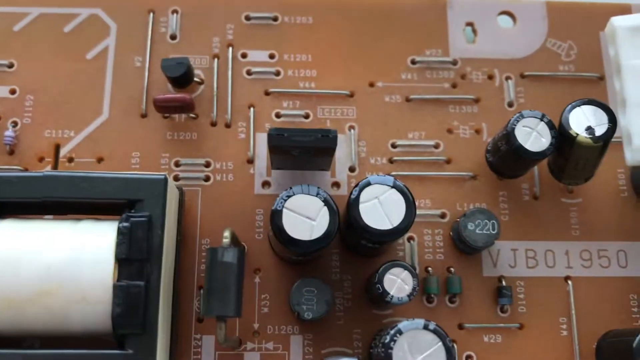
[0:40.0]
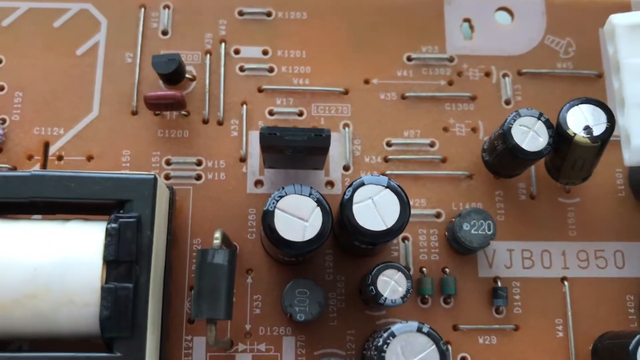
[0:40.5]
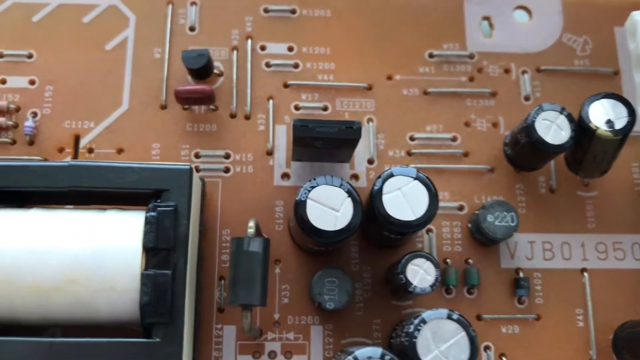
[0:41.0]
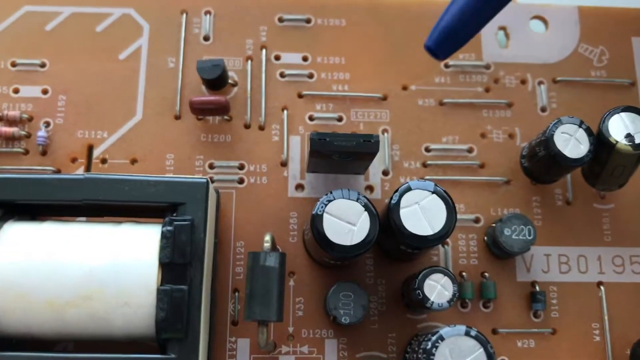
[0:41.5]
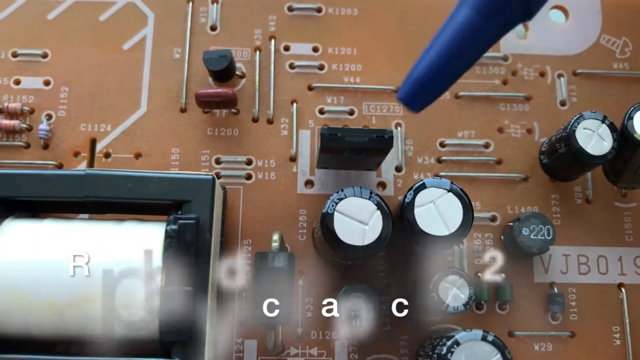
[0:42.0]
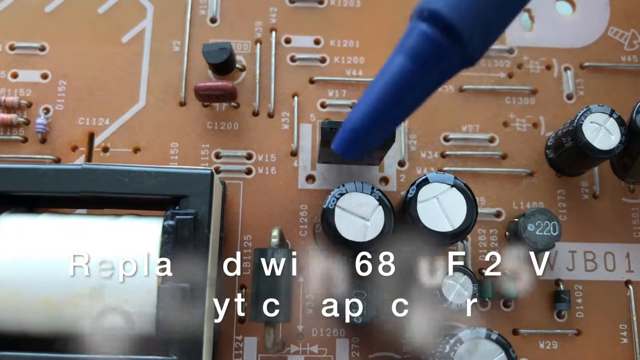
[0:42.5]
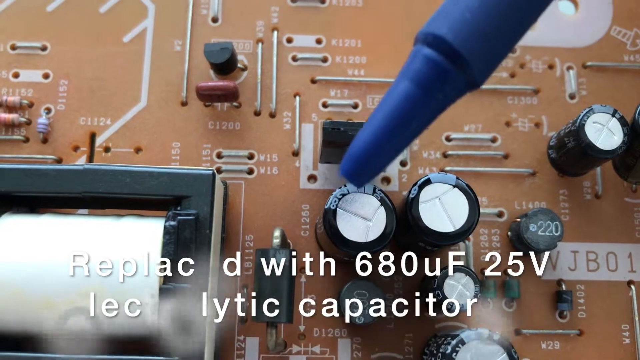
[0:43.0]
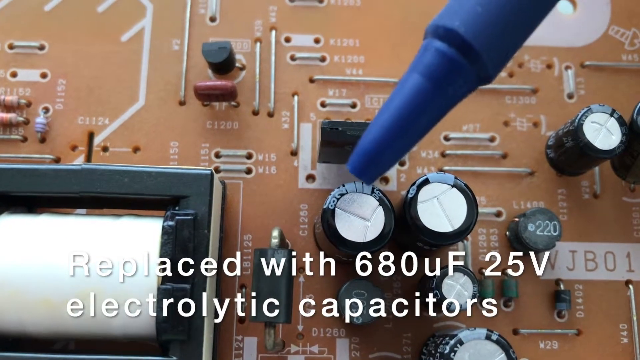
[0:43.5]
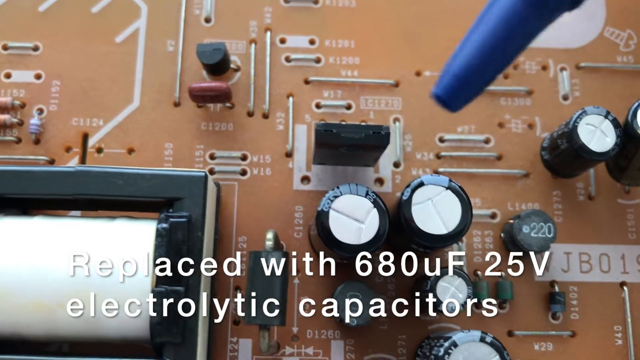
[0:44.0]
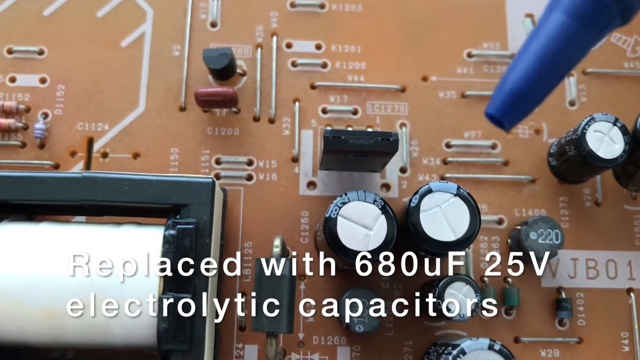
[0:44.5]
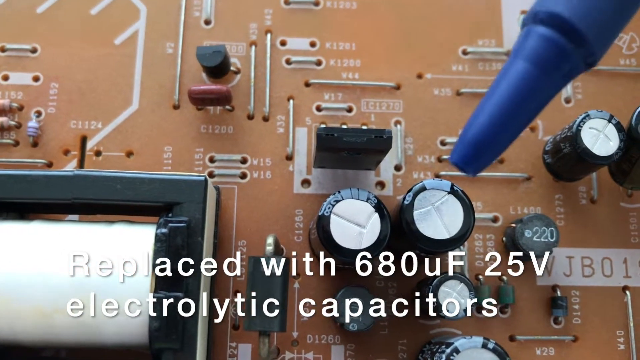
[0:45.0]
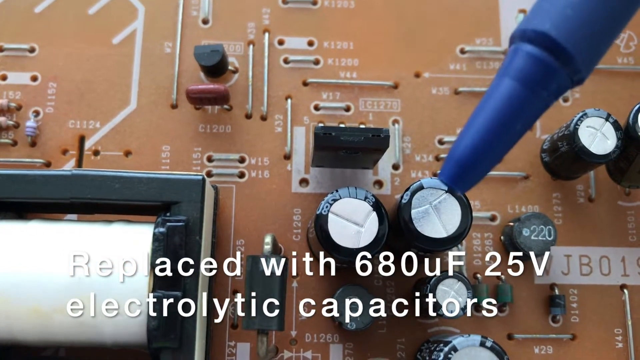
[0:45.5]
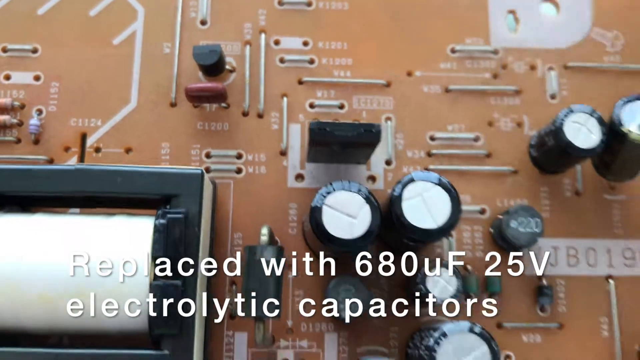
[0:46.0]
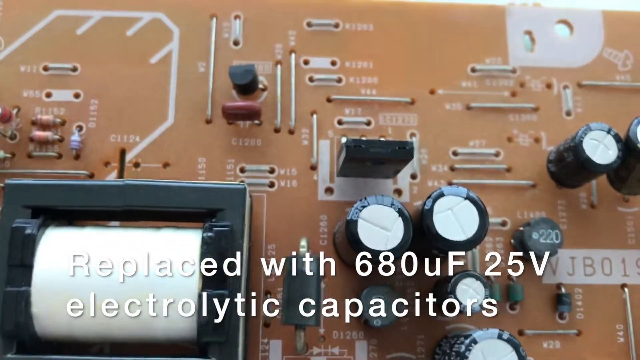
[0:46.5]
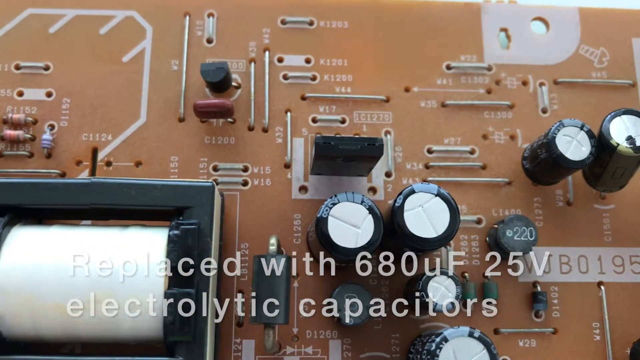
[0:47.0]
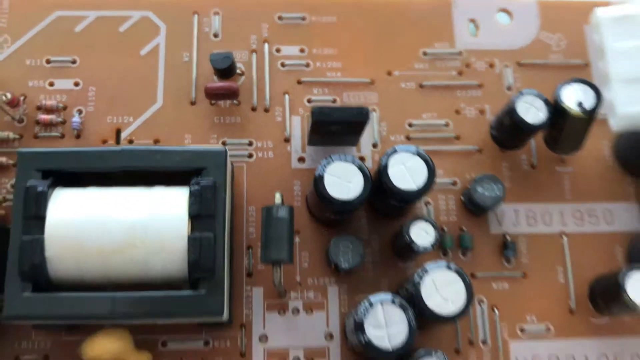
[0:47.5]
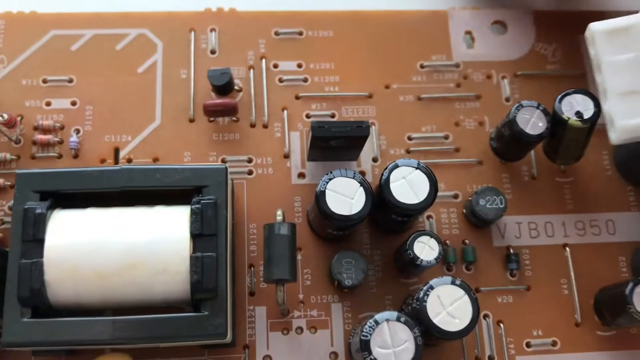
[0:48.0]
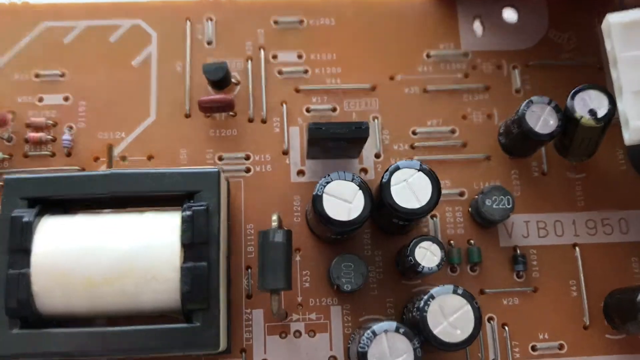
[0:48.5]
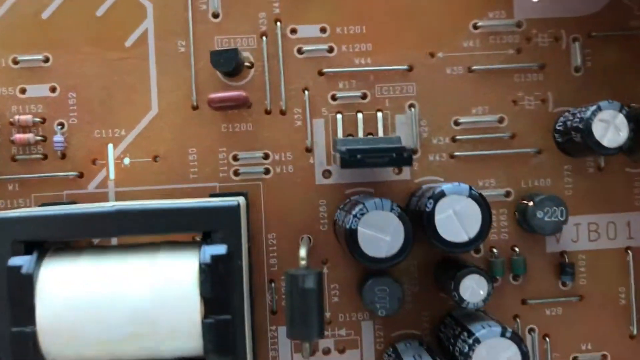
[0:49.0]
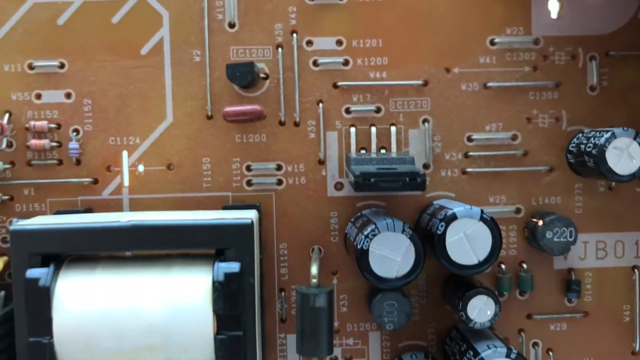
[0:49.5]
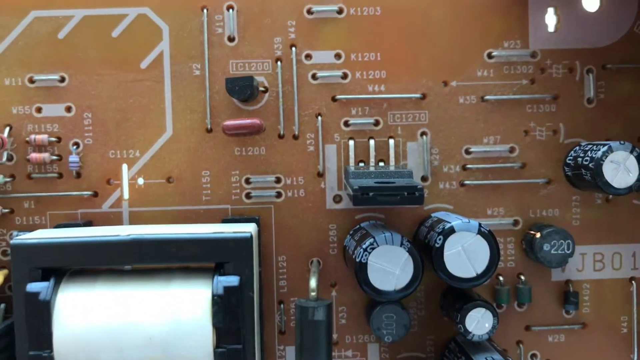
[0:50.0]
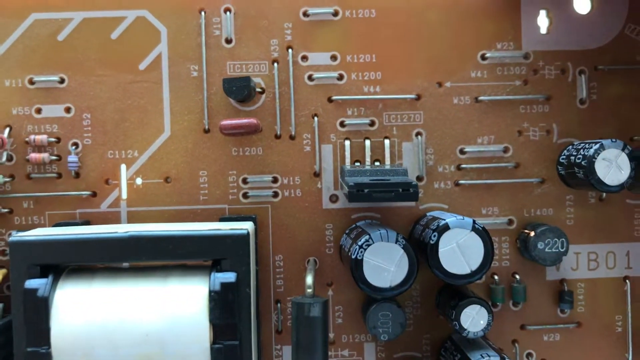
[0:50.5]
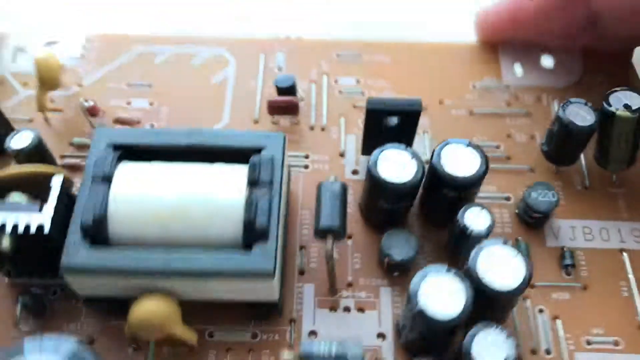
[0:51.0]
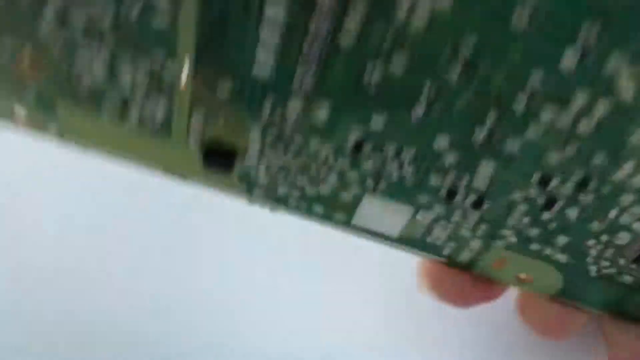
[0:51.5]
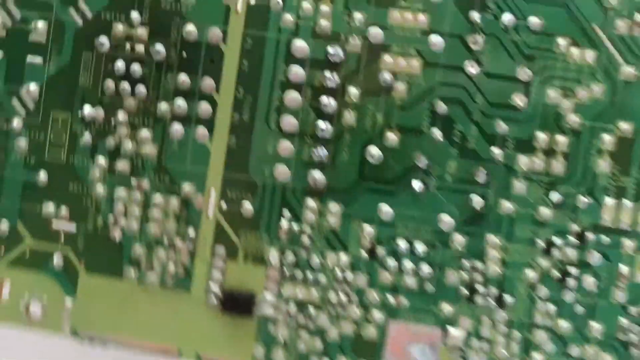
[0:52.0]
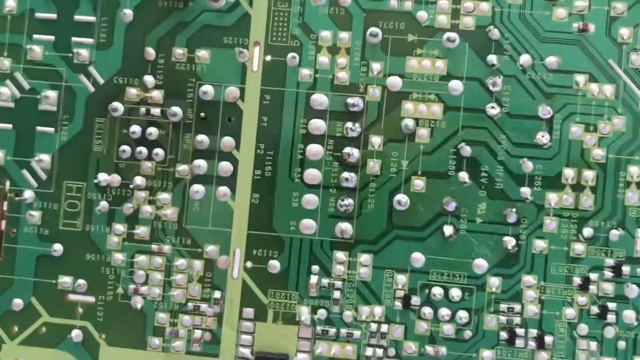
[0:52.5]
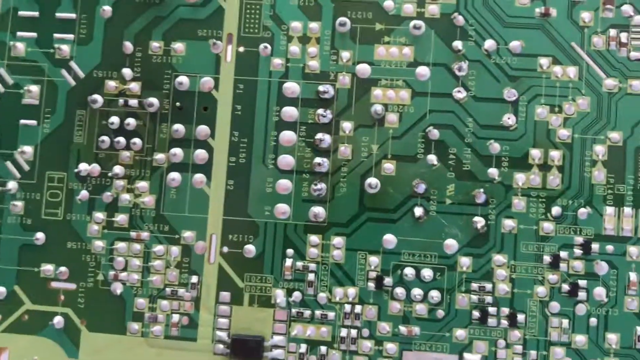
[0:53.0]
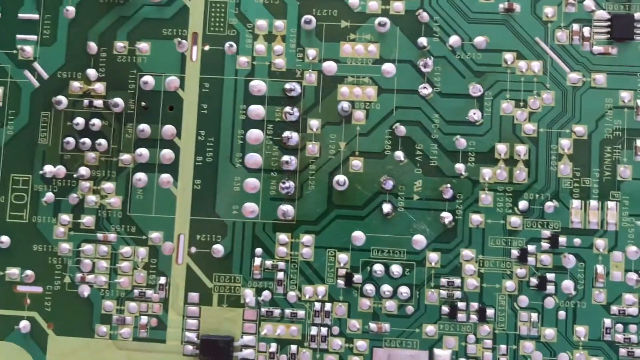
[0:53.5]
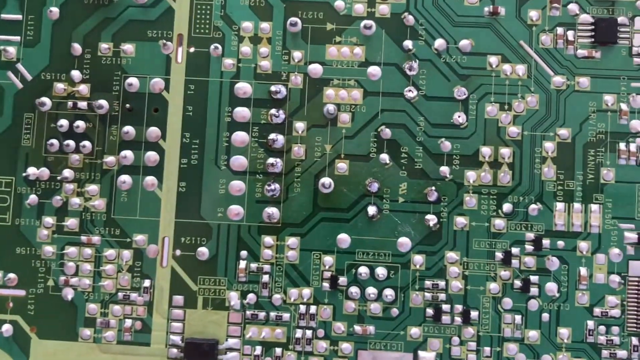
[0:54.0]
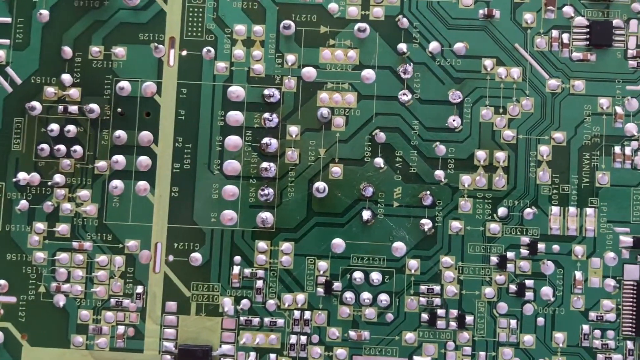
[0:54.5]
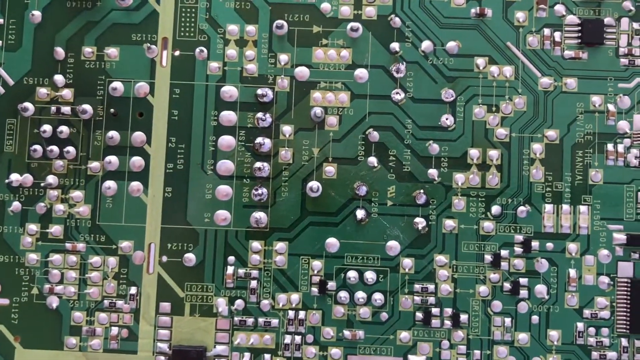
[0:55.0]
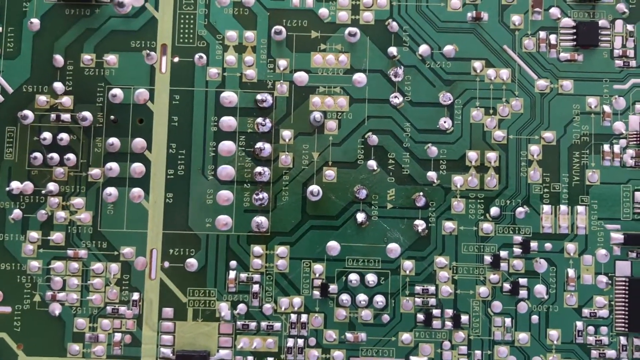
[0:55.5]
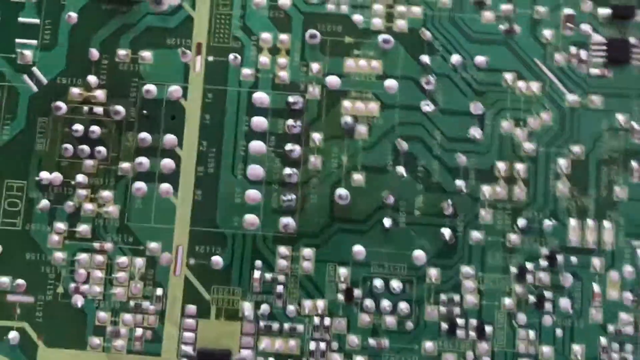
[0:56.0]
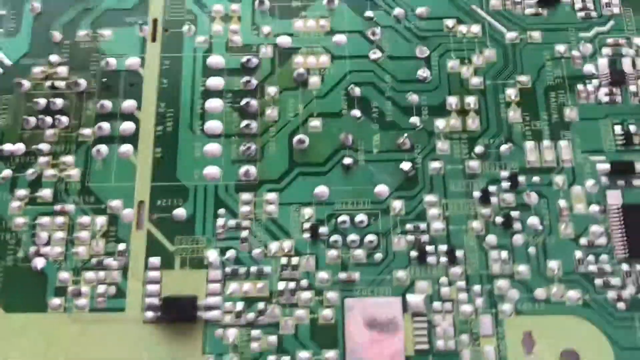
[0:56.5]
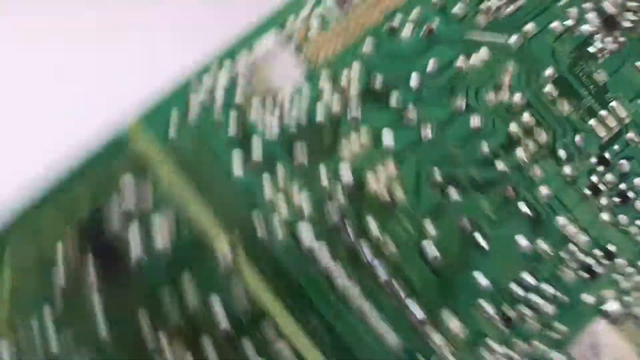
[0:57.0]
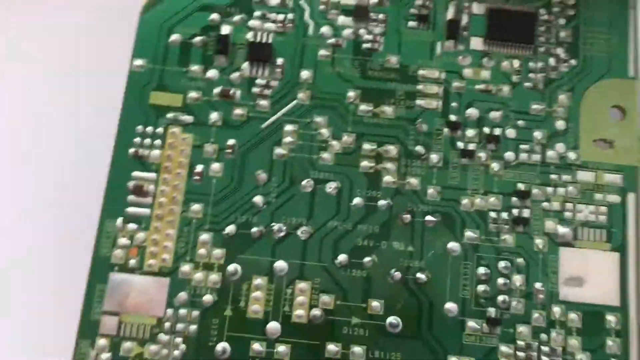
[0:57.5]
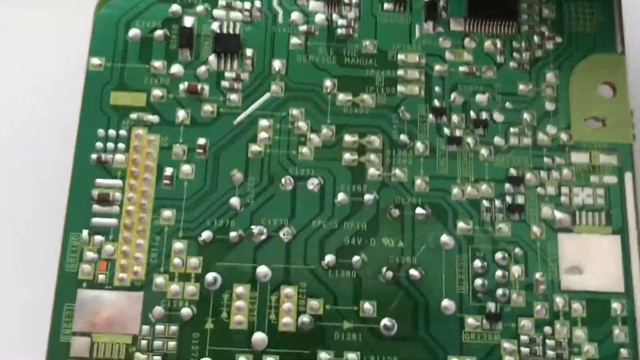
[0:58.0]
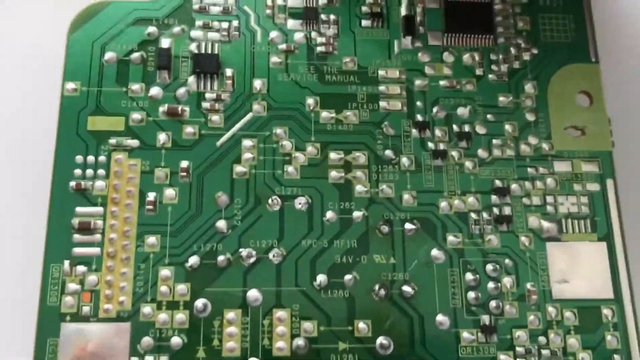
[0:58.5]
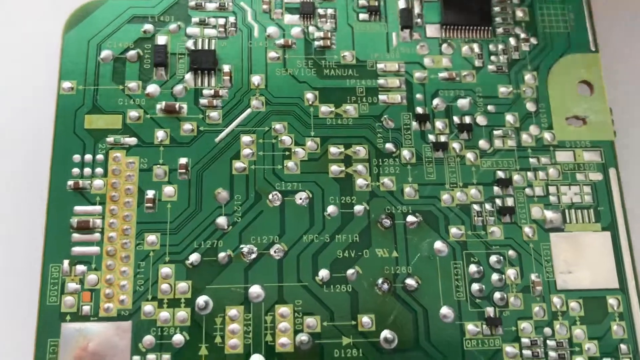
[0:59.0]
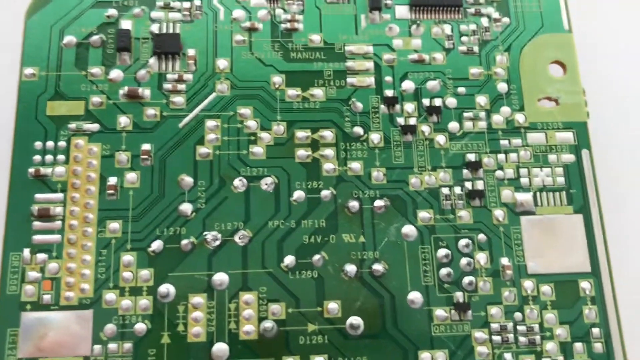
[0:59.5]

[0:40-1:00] The camera stays focused on the electrolytic capacitors, which are pointed at again with the same blue crayon or blue pen. Another line of white bold text appears at the bottom of the screen, reading "replaced with 680 UF 25 volts electrolytic capacitors", indicating that the lower-voltage capacitors were replaced with higher-voltage ones; no reason for the replacement is shown. The person recording then zooms out a bit and turns the circuit plate around. The other side is a typical electronic circuit like those in smartphones, TVs and computers, green and metallic in color.